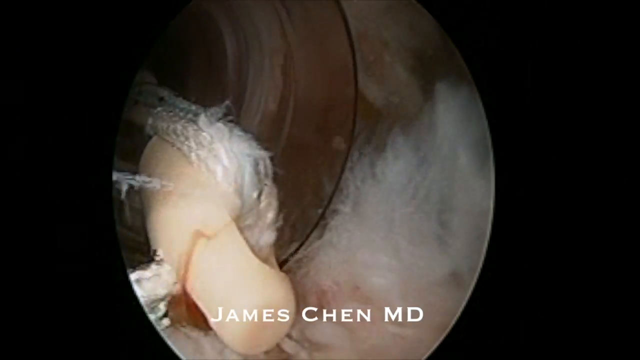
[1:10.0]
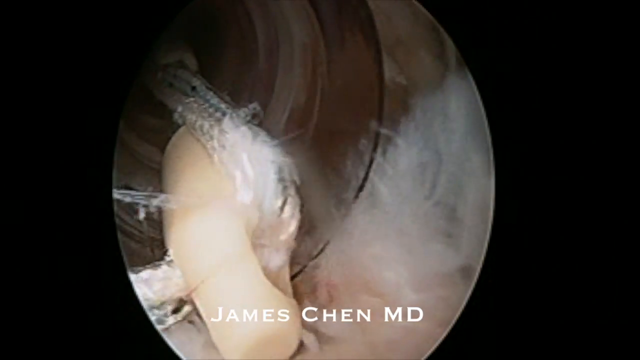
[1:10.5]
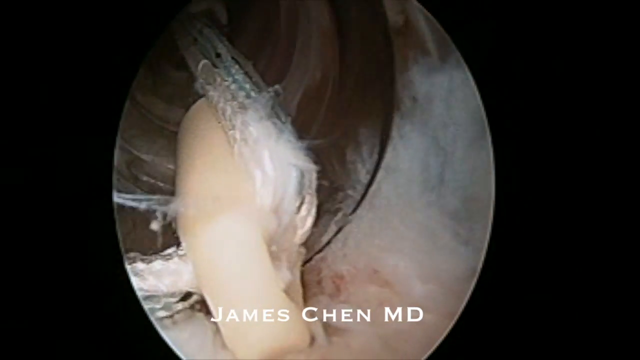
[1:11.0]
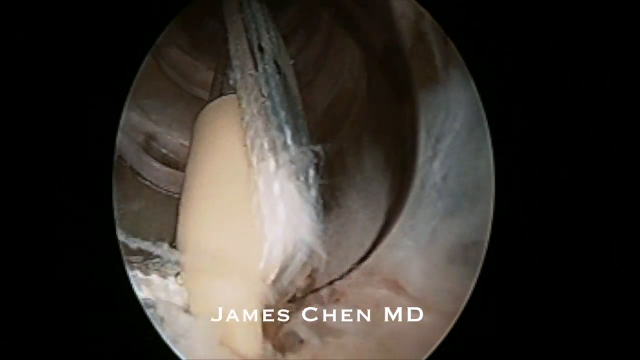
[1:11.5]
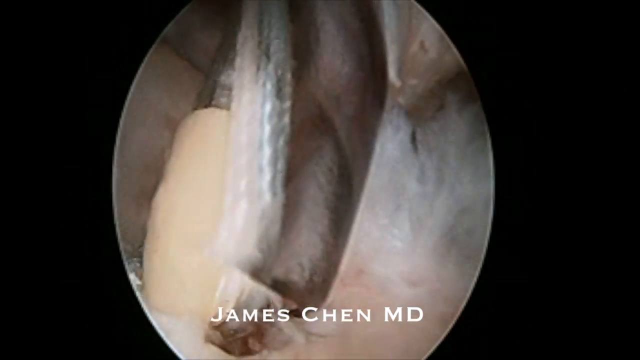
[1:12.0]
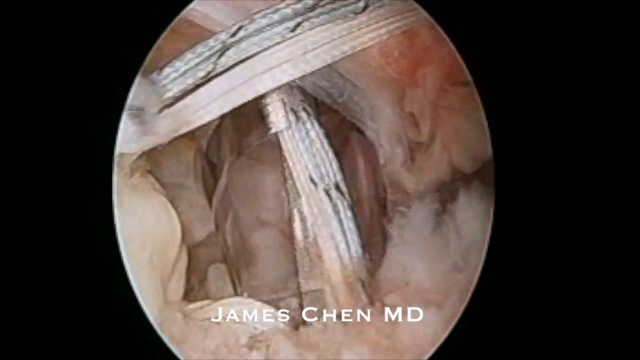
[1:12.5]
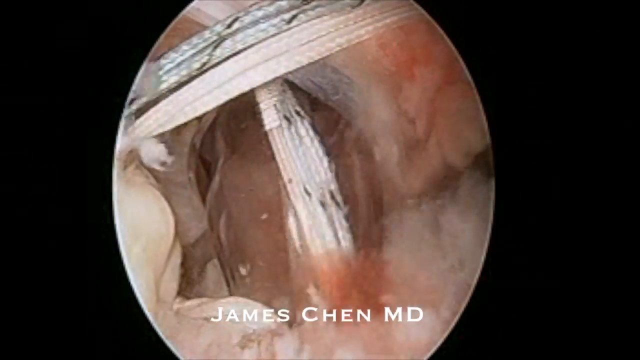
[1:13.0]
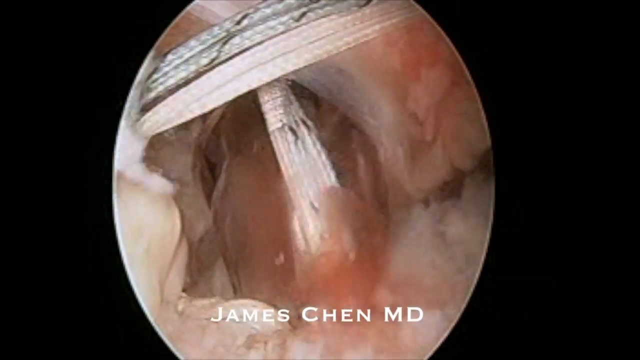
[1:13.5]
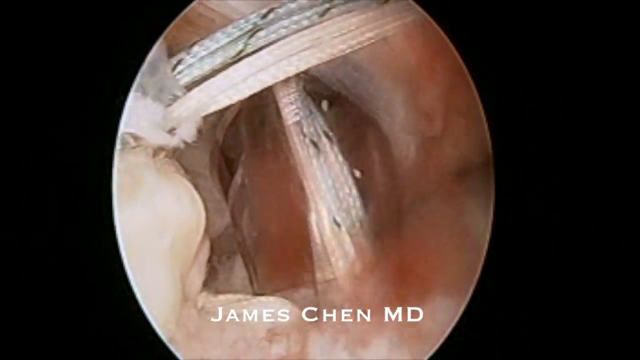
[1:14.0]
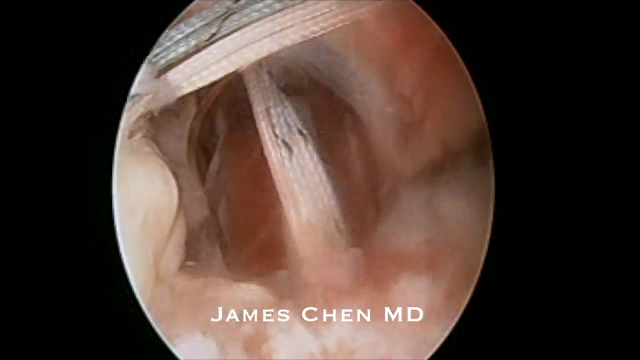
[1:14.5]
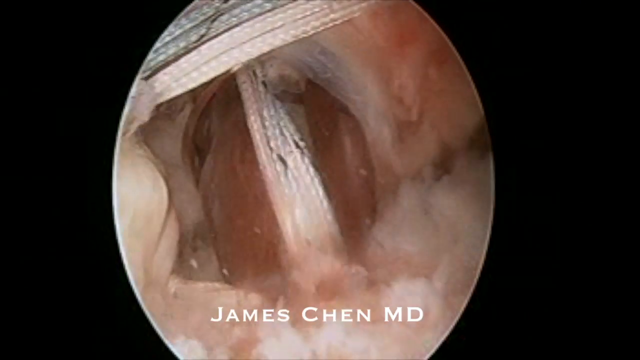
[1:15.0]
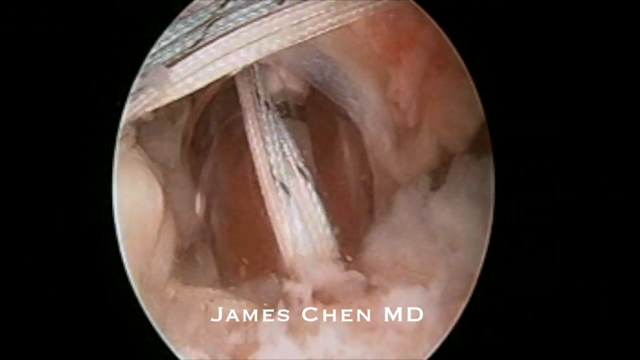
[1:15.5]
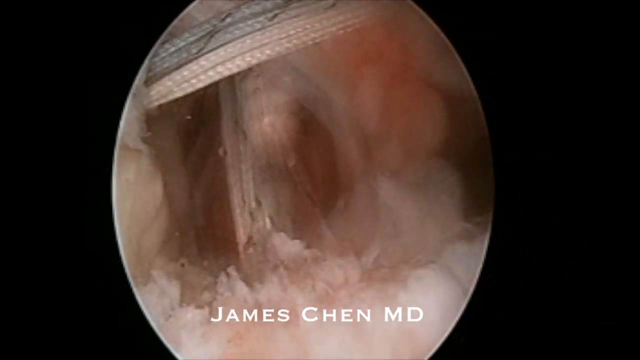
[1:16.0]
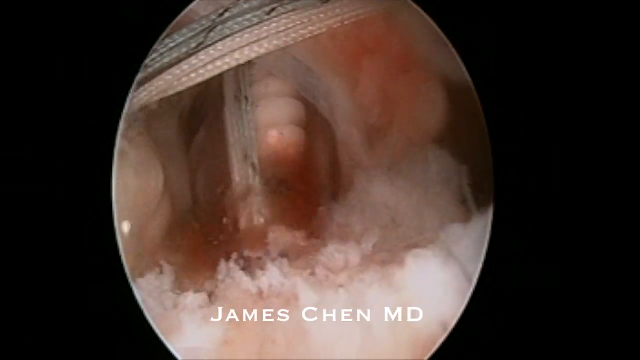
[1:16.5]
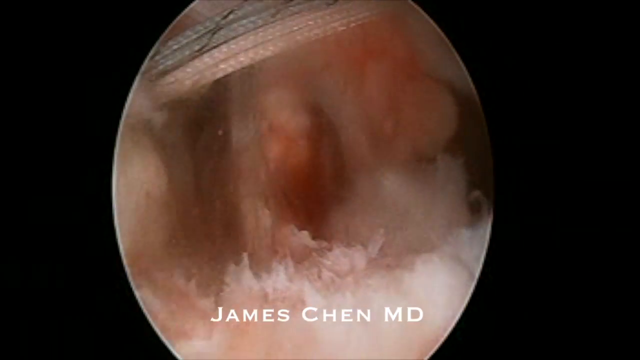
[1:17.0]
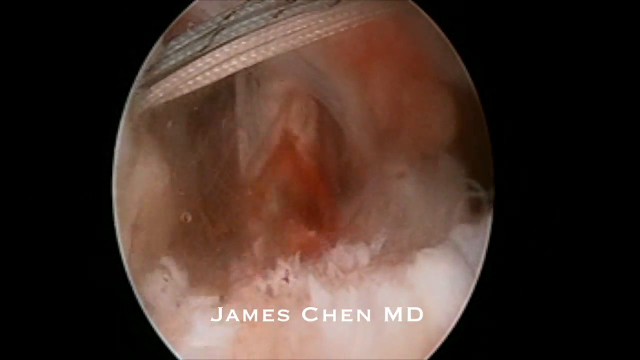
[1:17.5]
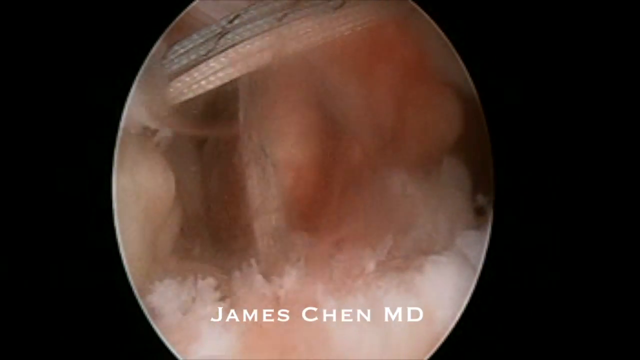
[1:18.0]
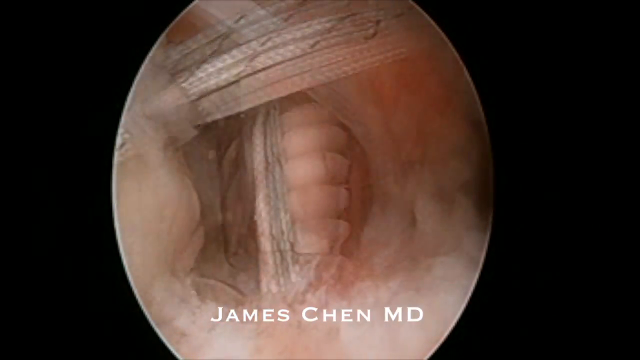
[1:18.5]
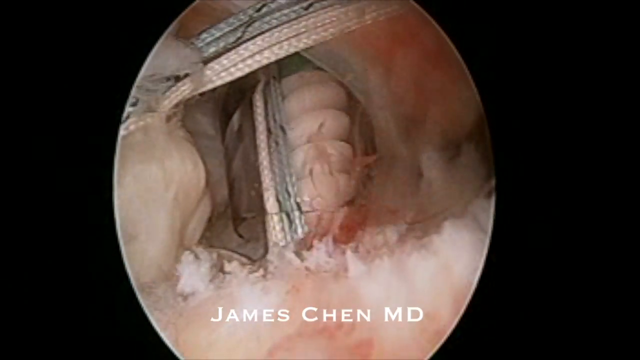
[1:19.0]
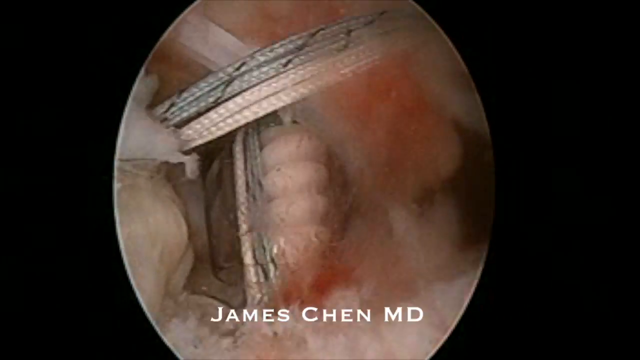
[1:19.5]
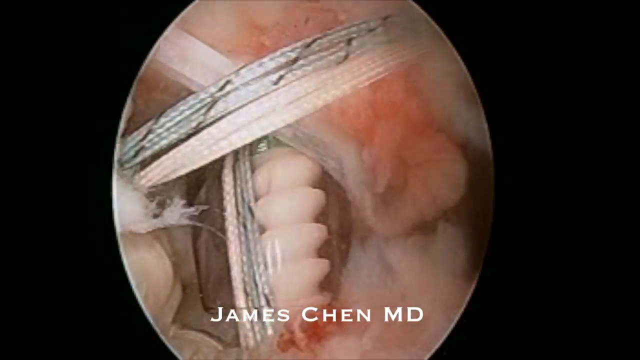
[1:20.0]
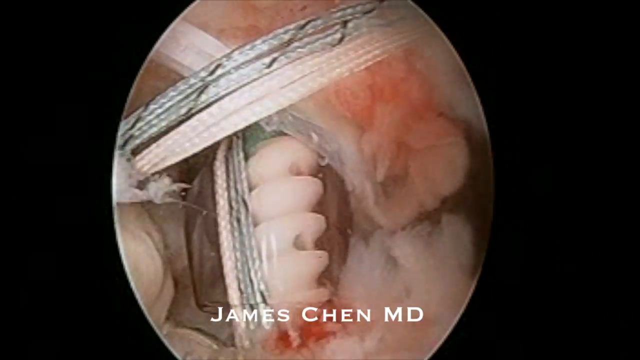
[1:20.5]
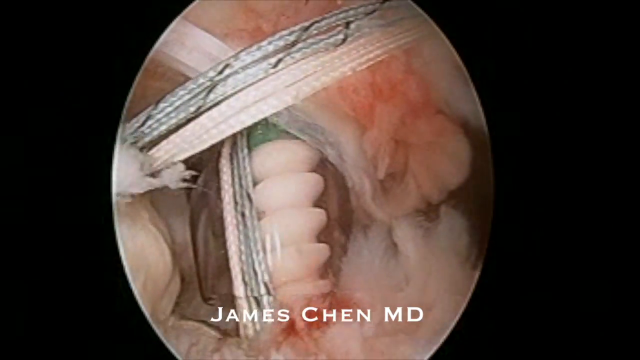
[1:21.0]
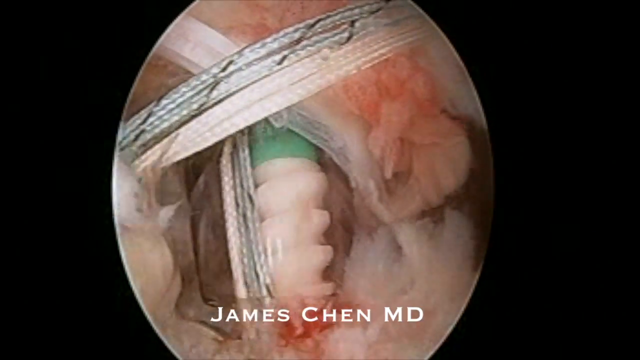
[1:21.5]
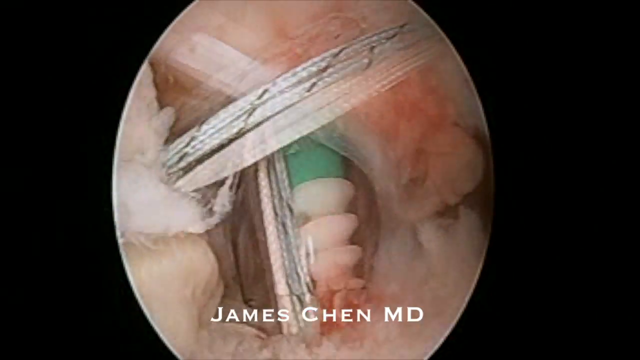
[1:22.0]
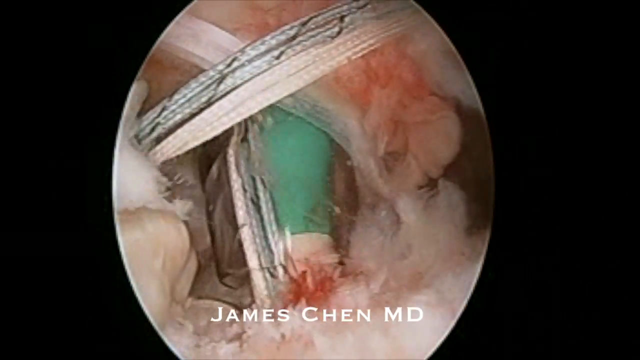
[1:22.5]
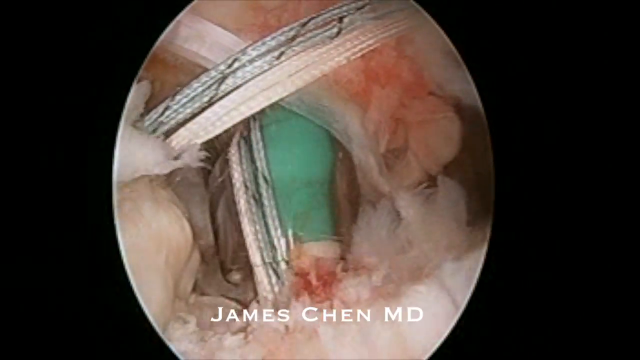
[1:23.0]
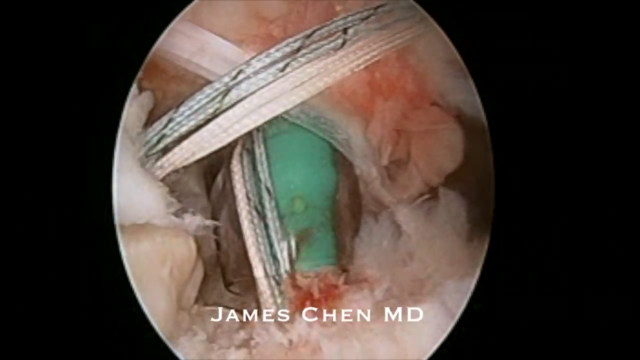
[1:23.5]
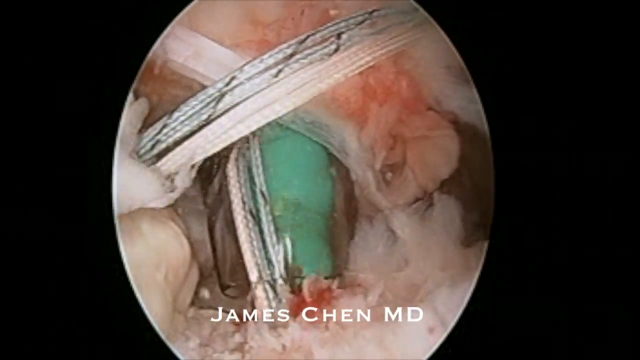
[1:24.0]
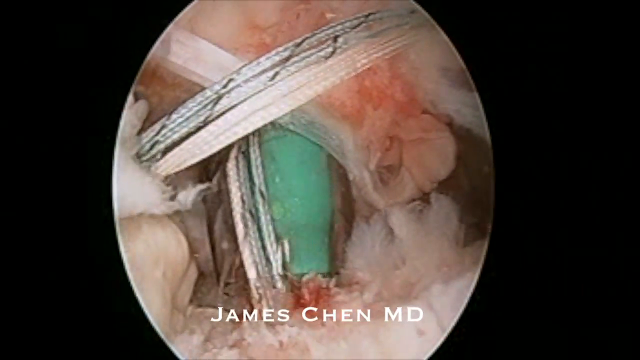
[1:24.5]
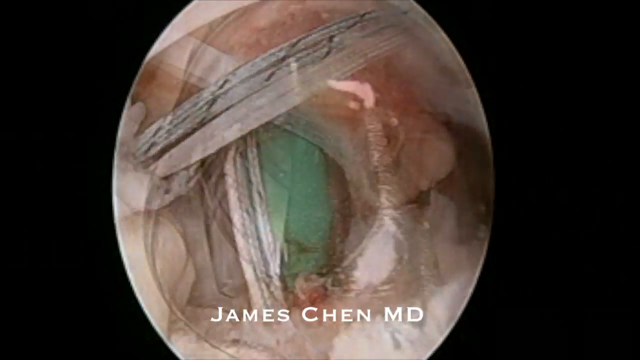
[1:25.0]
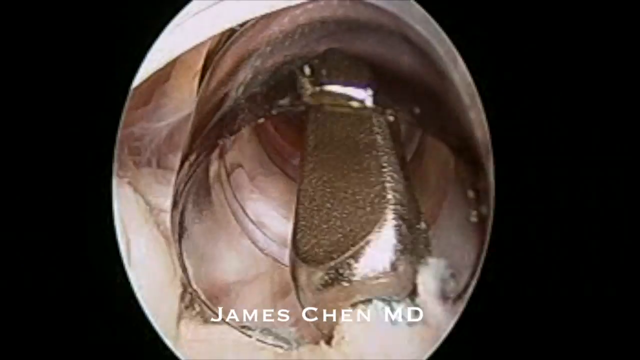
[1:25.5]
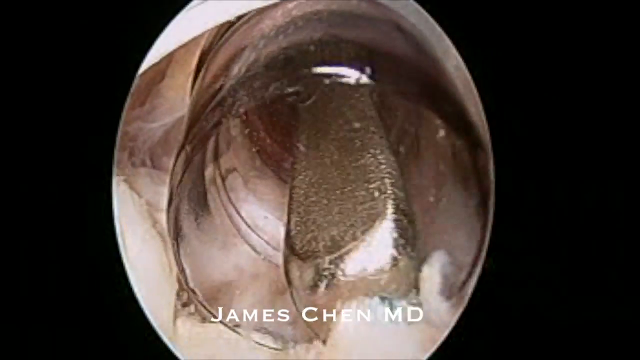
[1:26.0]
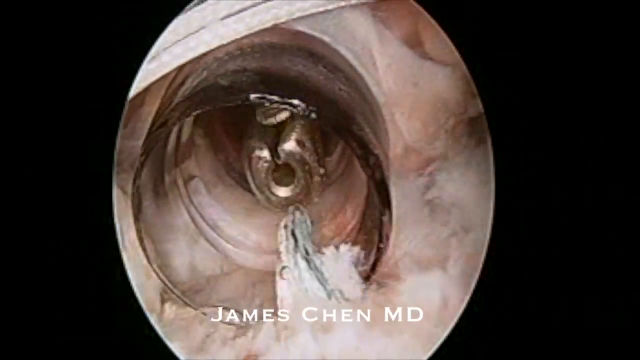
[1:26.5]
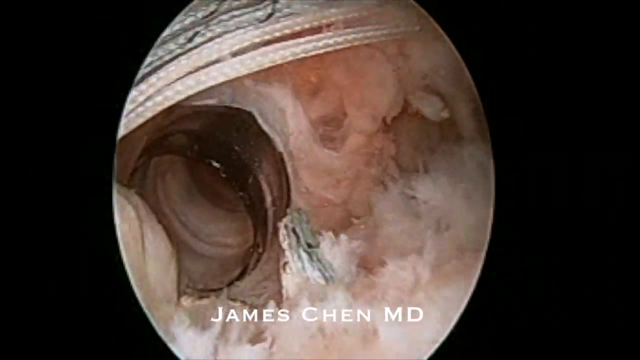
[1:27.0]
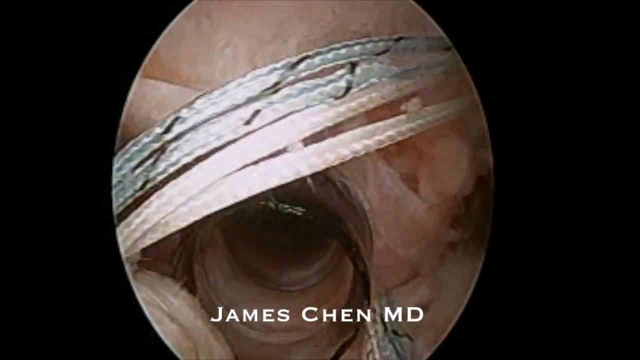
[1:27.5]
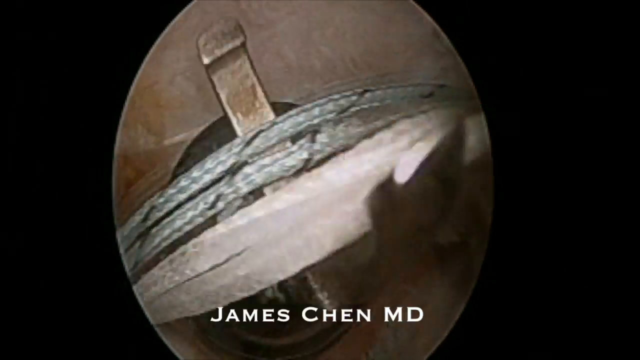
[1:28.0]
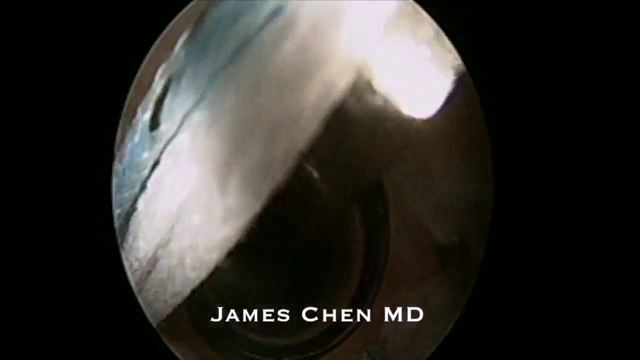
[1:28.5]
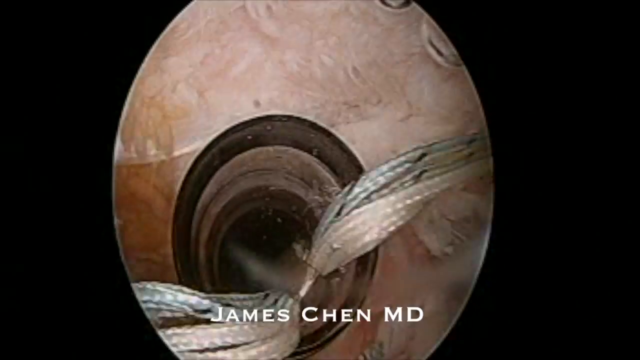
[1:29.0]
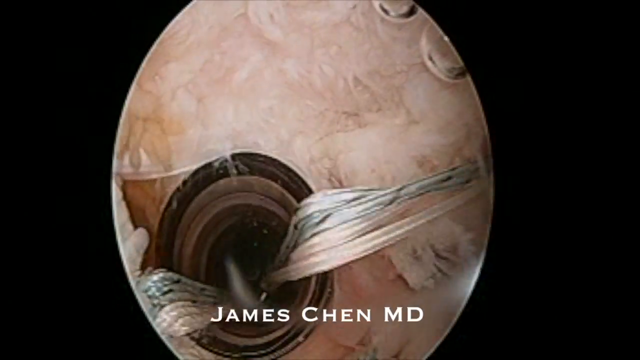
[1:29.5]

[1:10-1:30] Strands of rope pass through a hook-type item that appears to be plastic and almost looks like the piece at the end of the cord on household blinds. The silver cutting object is then used; it spins and moves the image up and down, and little specks of white and red fly, with some red coming out where the tool is working. Another tool, white, looks almost like the end of a hole digger, spiral-shaped with a tip, and it appears to be boring or drilling down into a specific part to make a hole. Then a top view of a round cylindrical tube appears, and the rope is fed down the tube.